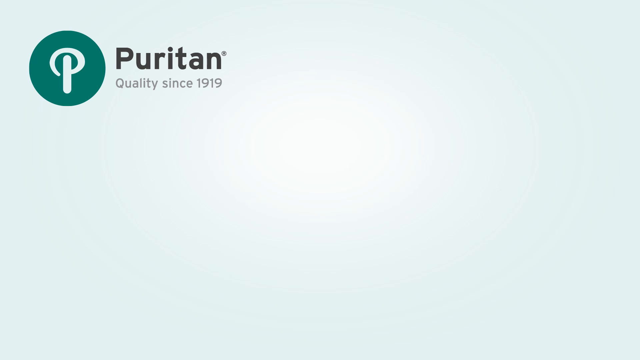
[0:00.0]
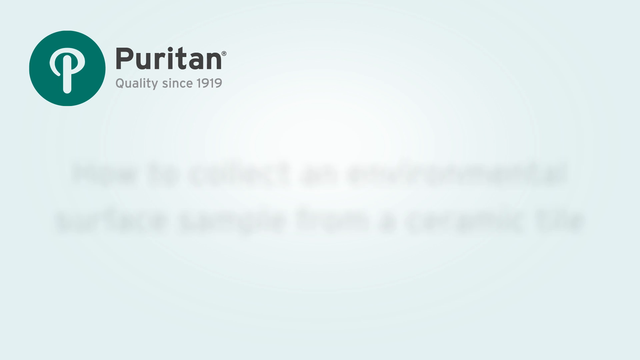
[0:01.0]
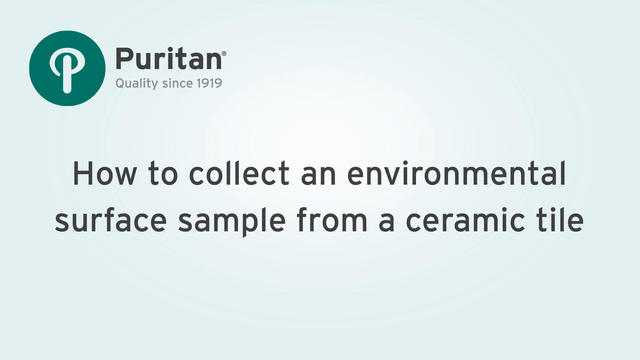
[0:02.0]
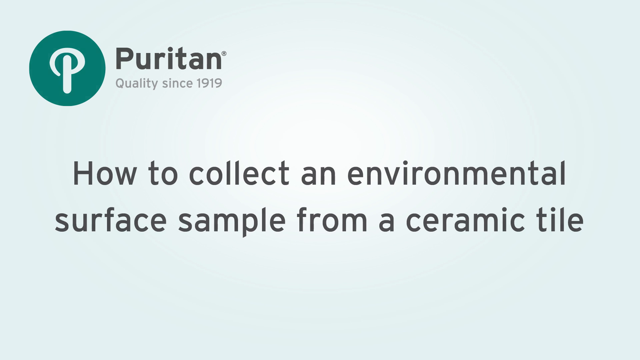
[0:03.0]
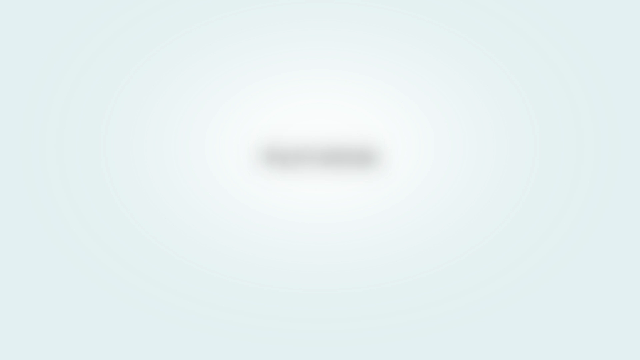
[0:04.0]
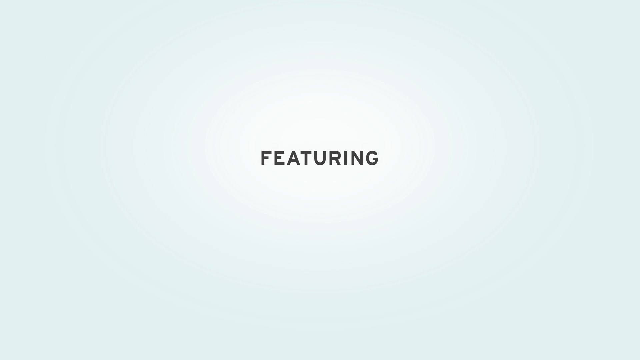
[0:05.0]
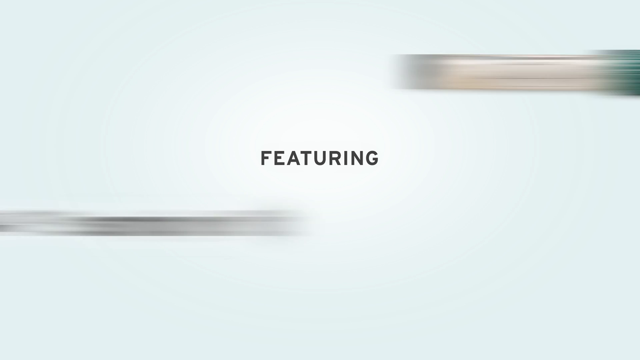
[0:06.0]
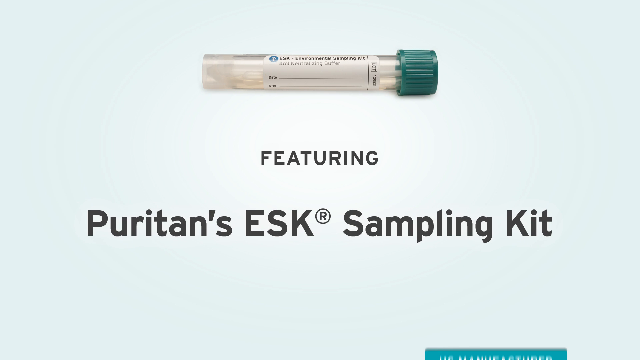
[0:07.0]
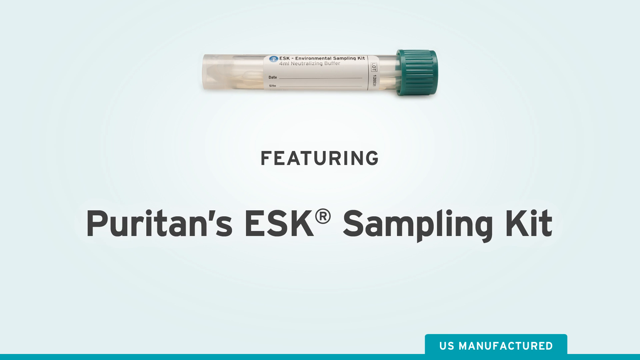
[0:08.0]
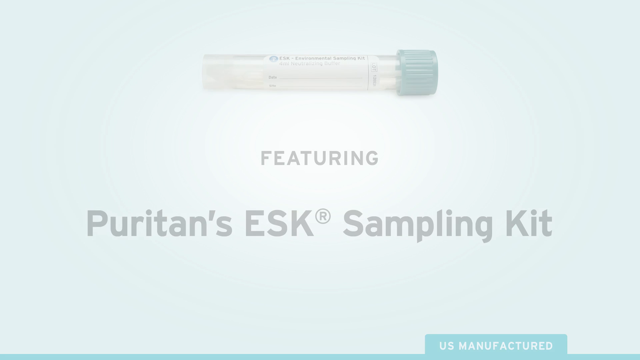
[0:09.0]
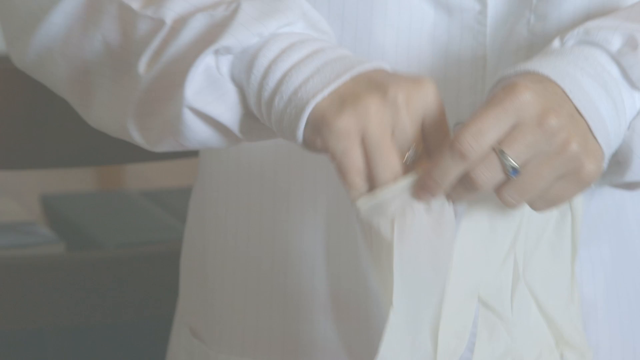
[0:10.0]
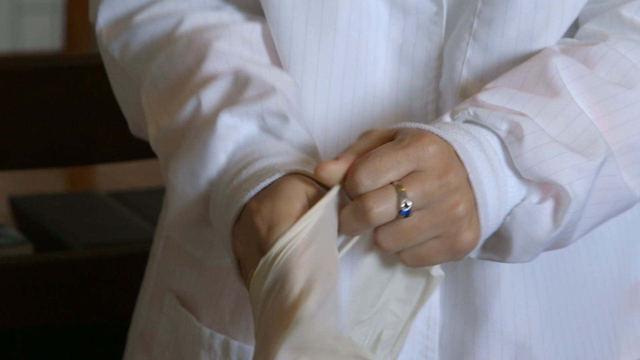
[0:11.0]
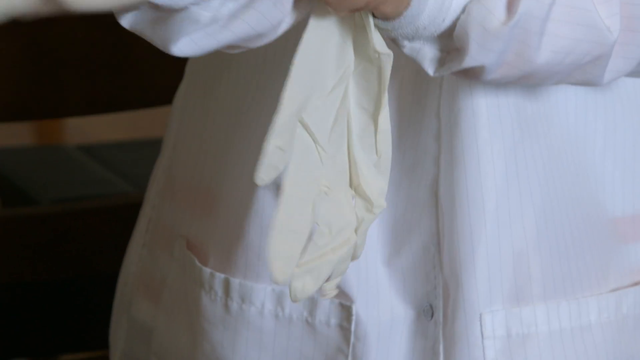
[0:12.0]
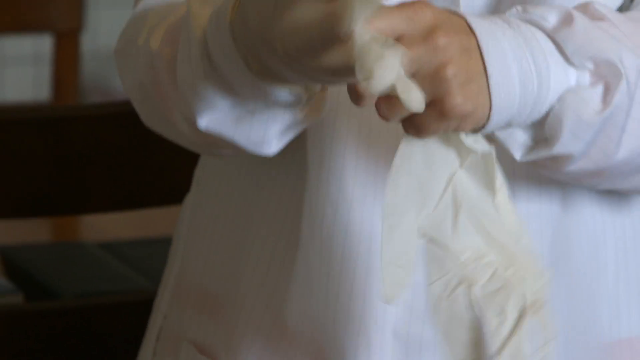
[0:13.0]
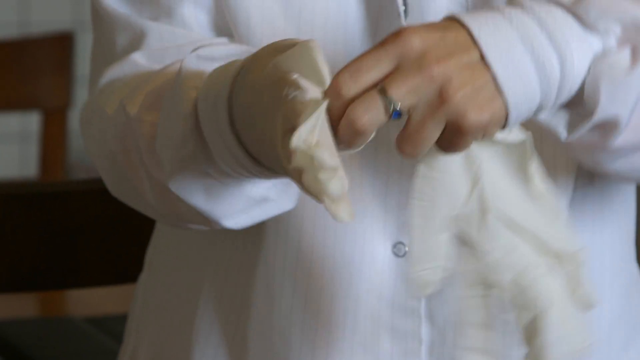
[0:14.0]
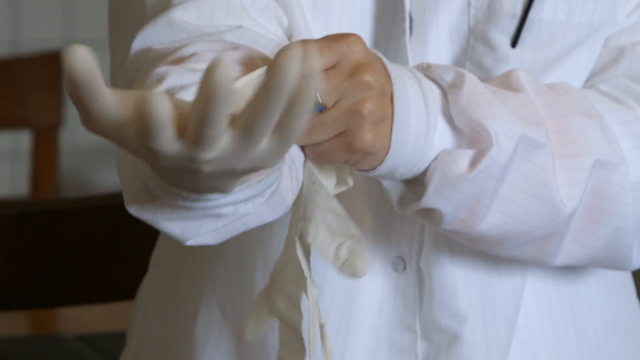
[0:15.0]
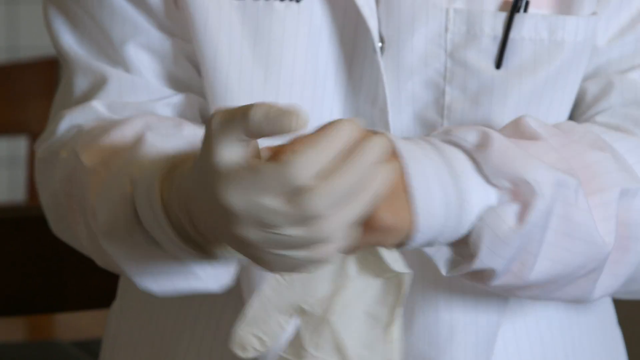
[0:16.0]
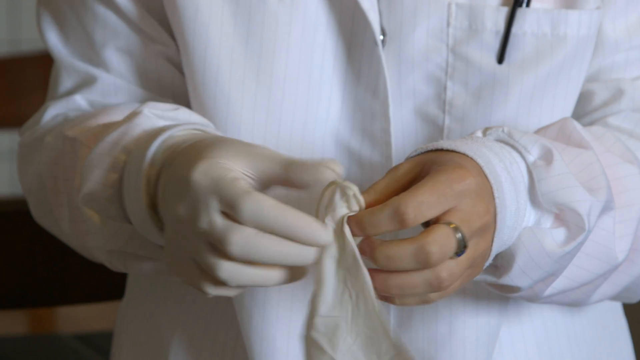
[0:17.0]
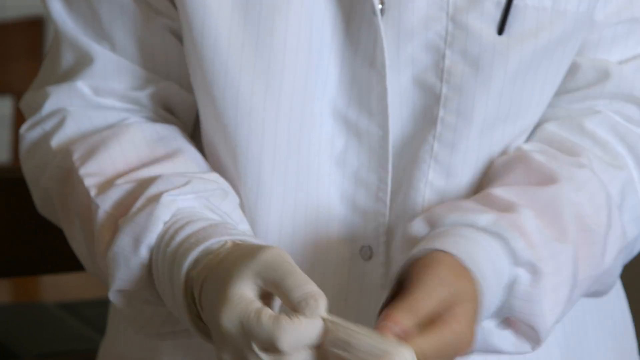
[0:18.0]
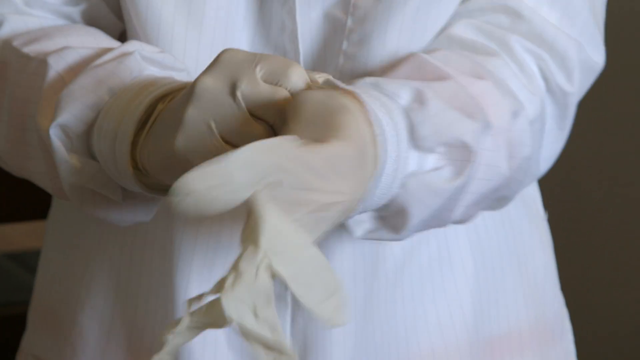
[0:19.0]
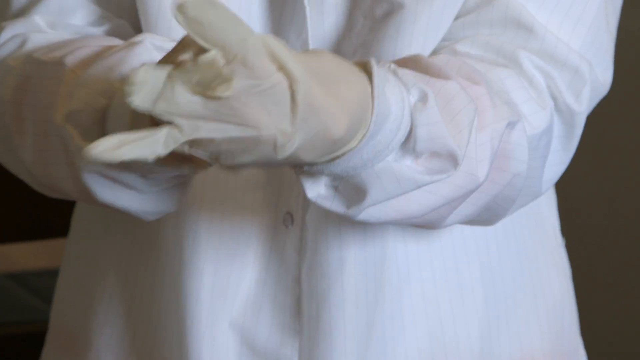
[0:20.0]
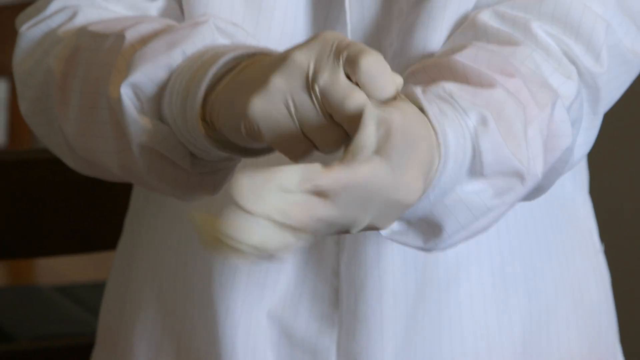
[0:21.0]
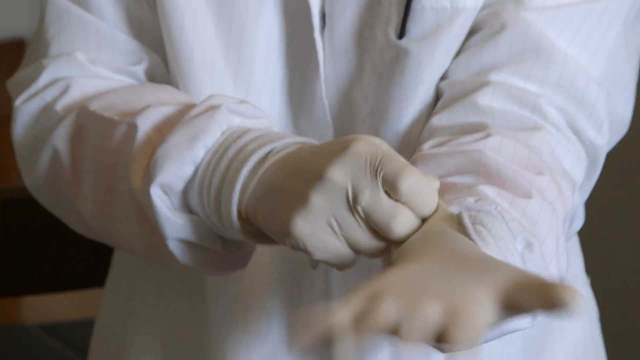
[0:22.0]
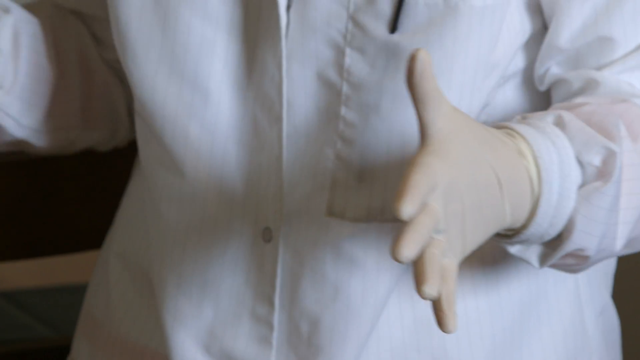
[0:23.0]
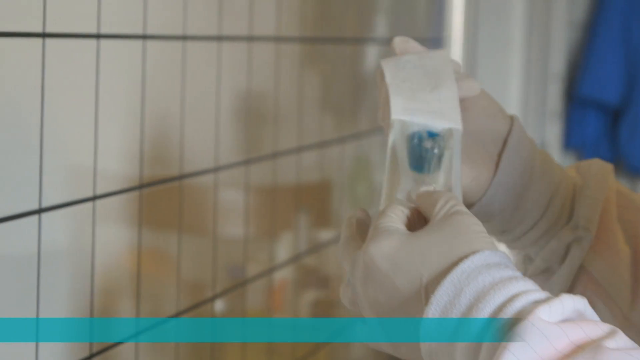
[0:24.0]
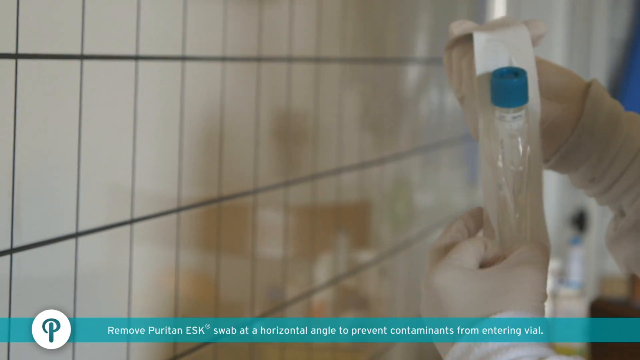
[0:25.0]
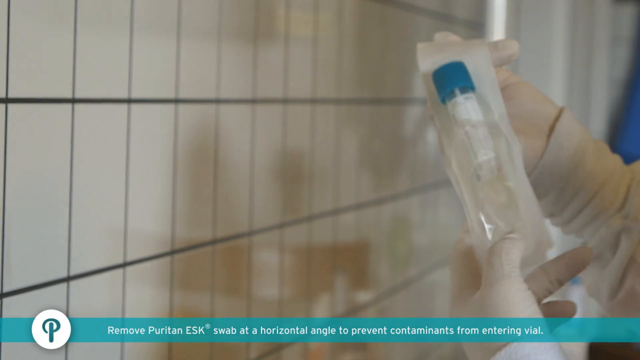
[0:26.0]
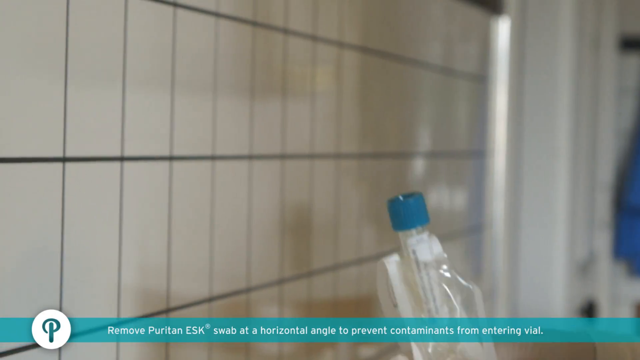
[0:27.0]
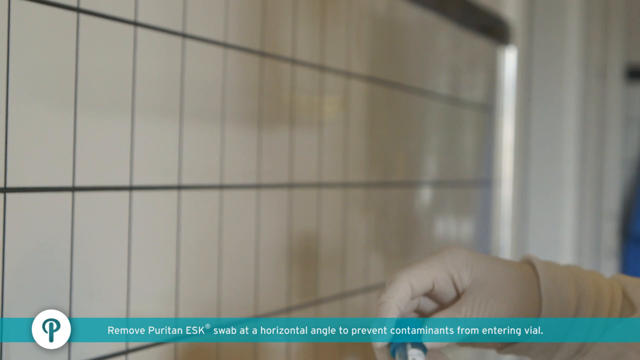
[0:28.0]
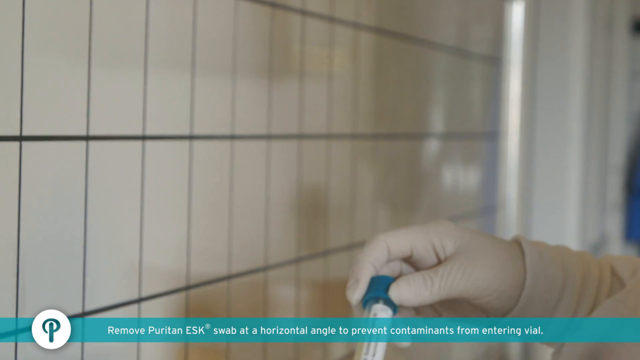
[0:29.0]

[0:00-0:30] A thumbnail reads "Puritan quality since 1919." The screen is blank apart from the black lettering; "Puritan" is in bold, and to its left is a green circle with a cursive P inside. Text then reads "How to collect an environmental surface sample" and "featuring Puritan ESK," with the rest of the line shown too quickly to read. A person in a lab coat appears, possibly a woman; only the hands, arms and a lab coat that looks too big are shown. The person wears a ring, apparently a mood ring, on the middle finger and puts on some type of examining gloves. Standing by a tile wall, the person takes a test tube with a turquoise blue cap out of a bag.